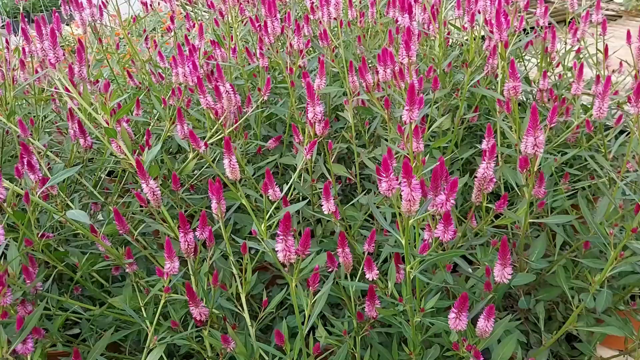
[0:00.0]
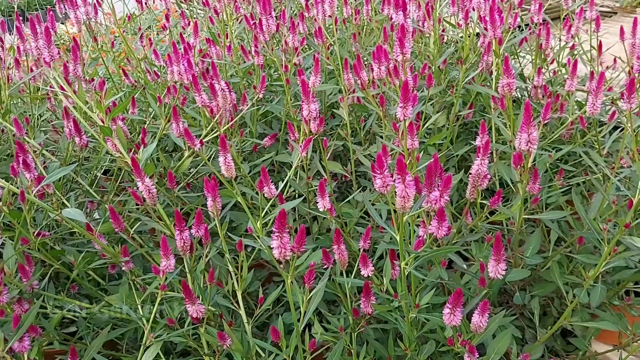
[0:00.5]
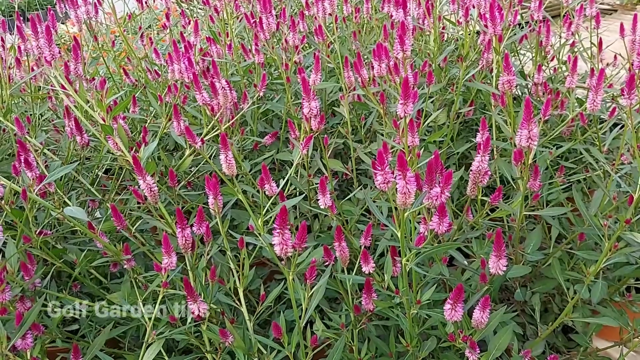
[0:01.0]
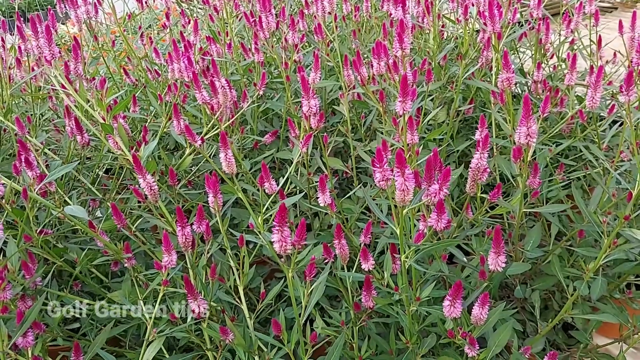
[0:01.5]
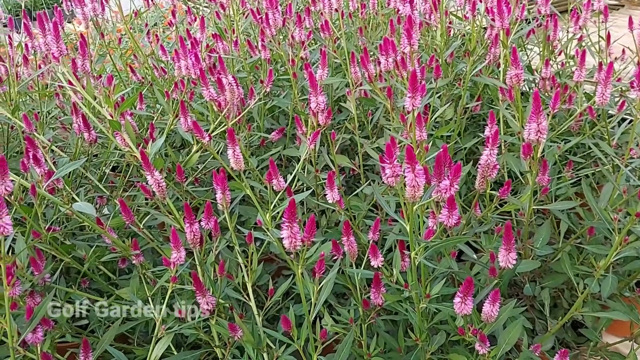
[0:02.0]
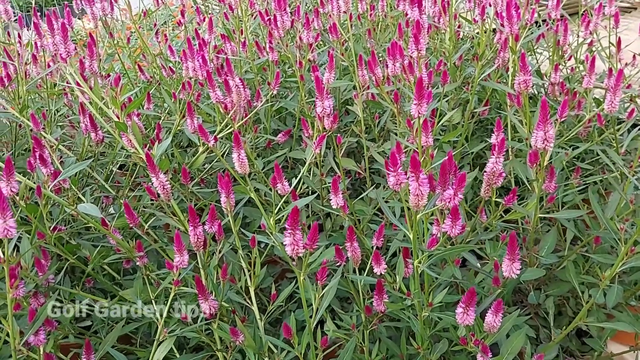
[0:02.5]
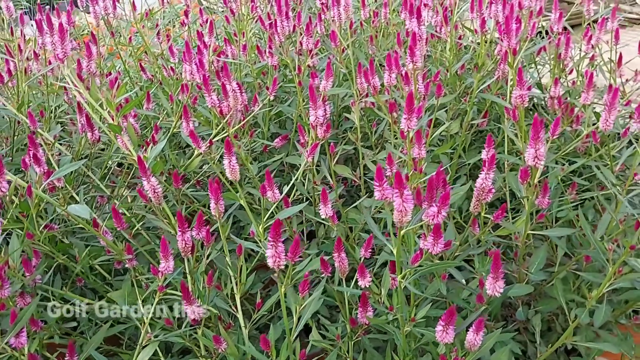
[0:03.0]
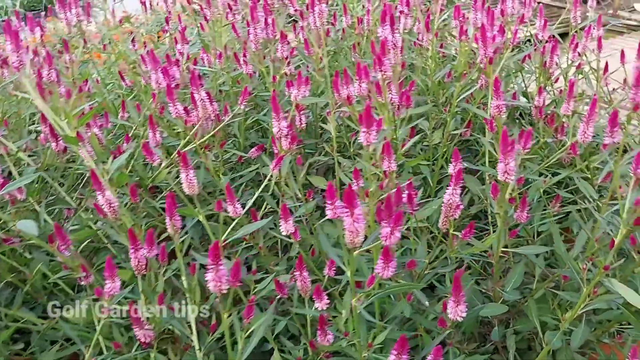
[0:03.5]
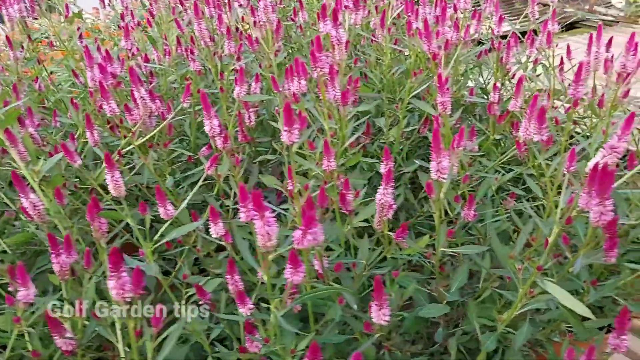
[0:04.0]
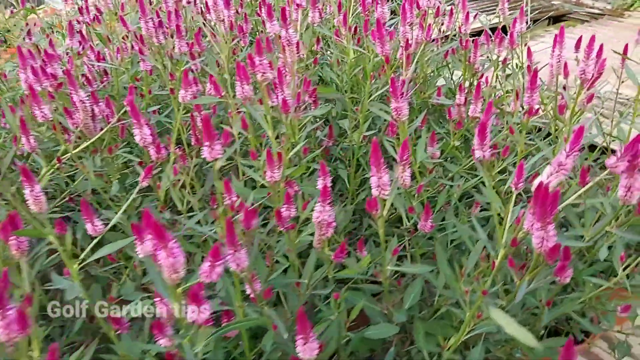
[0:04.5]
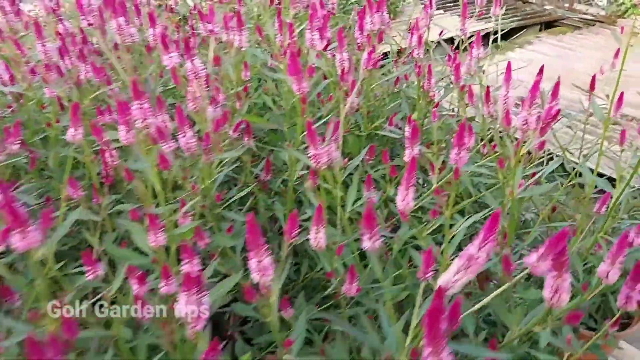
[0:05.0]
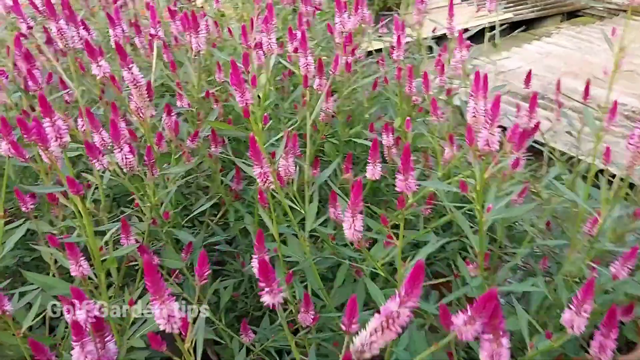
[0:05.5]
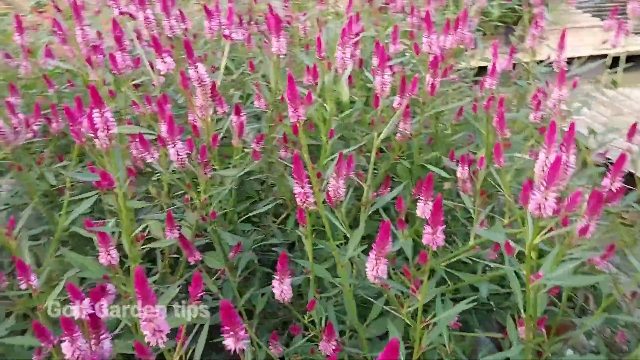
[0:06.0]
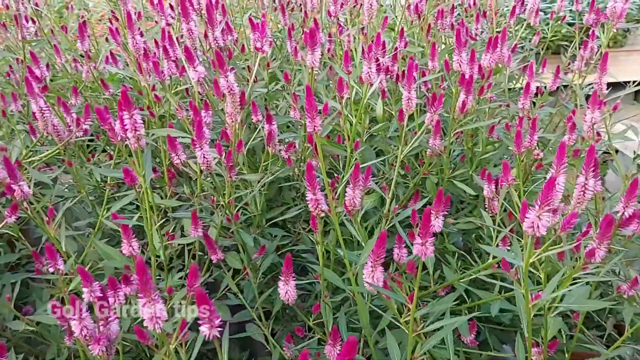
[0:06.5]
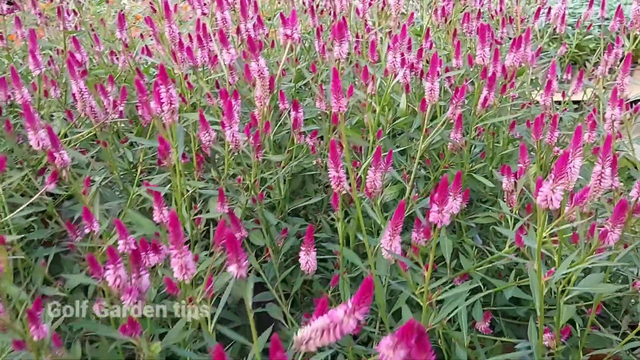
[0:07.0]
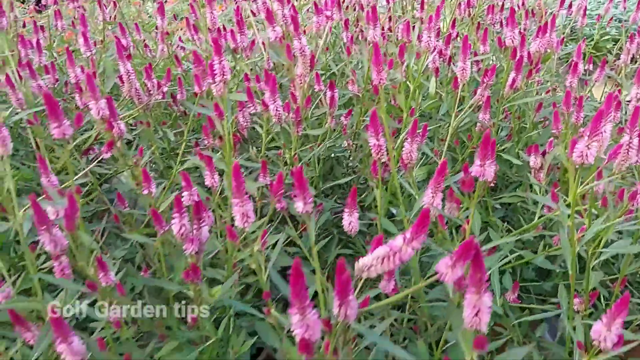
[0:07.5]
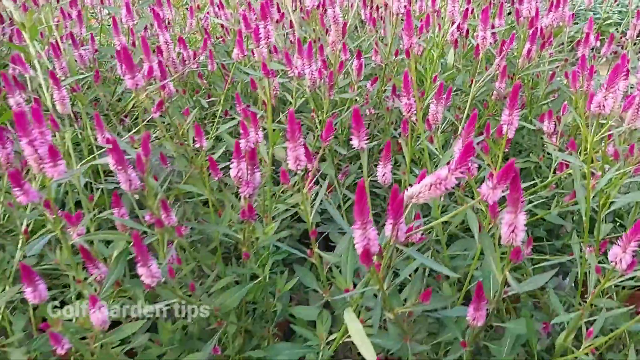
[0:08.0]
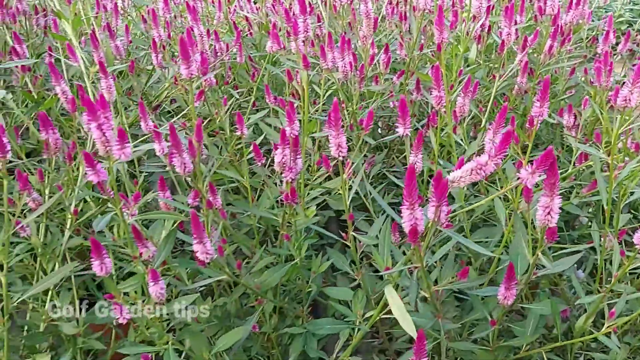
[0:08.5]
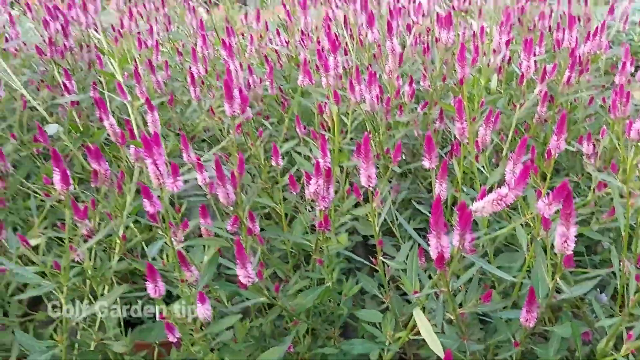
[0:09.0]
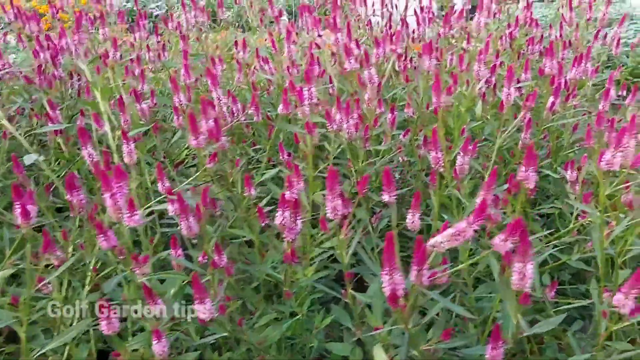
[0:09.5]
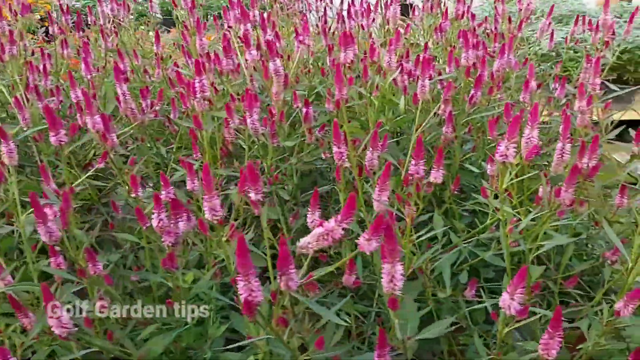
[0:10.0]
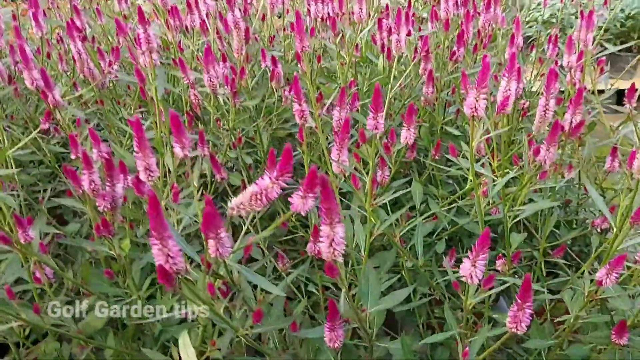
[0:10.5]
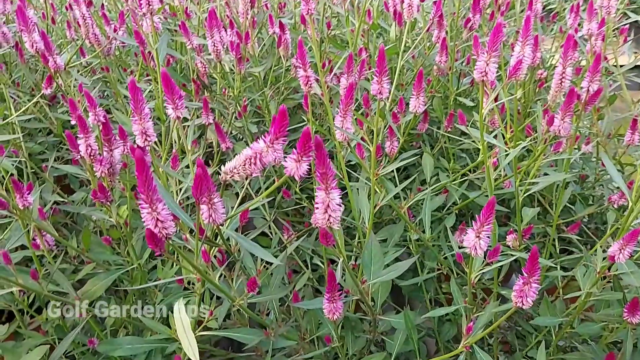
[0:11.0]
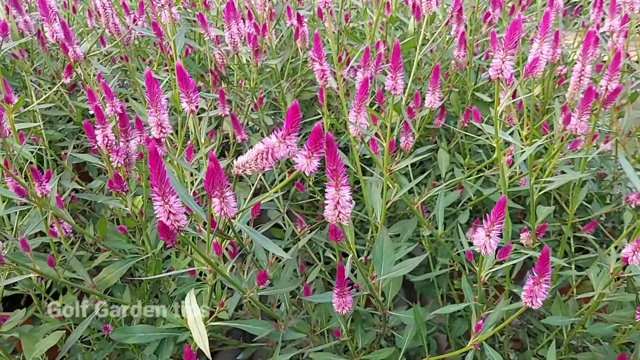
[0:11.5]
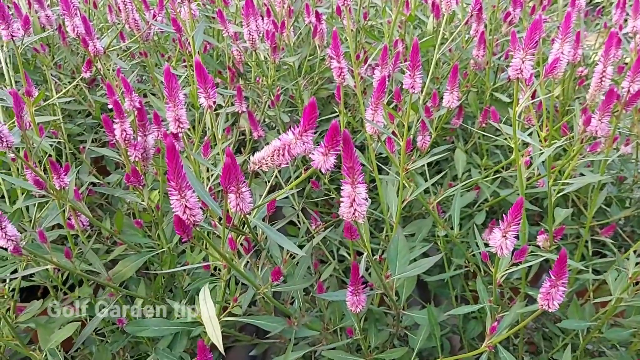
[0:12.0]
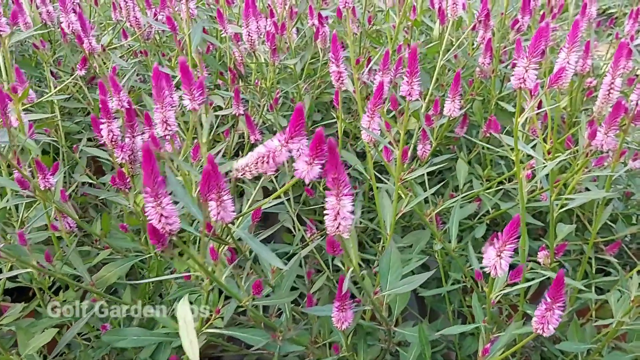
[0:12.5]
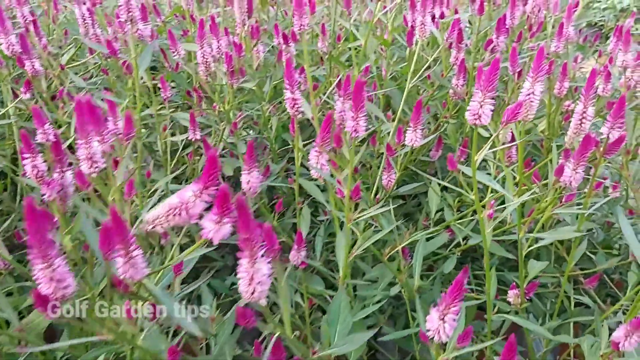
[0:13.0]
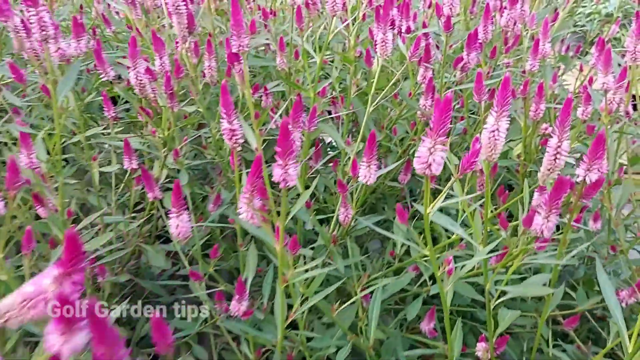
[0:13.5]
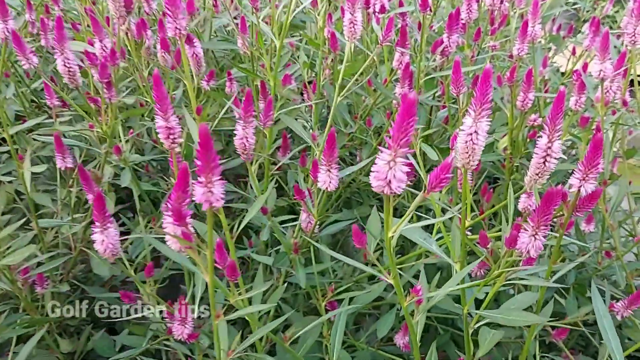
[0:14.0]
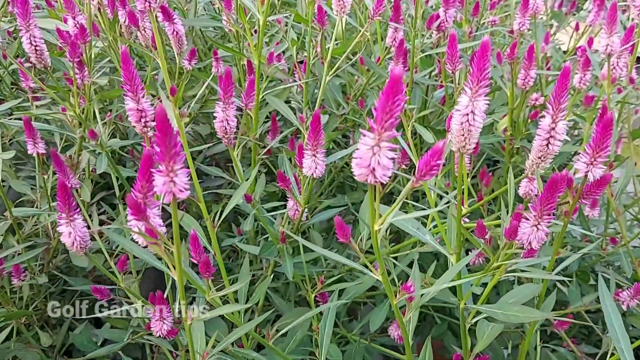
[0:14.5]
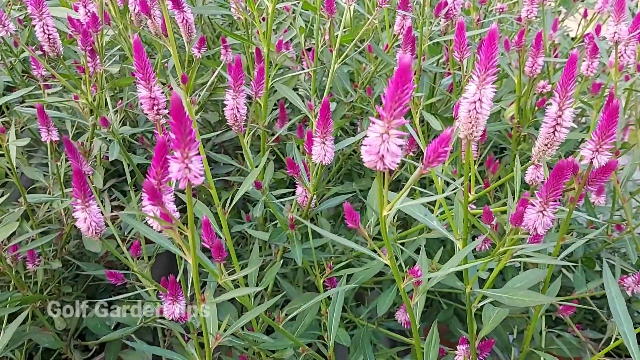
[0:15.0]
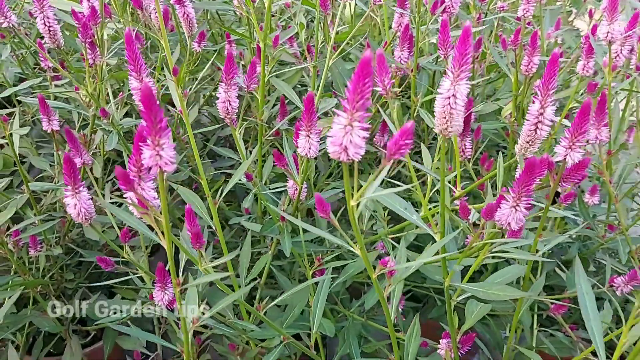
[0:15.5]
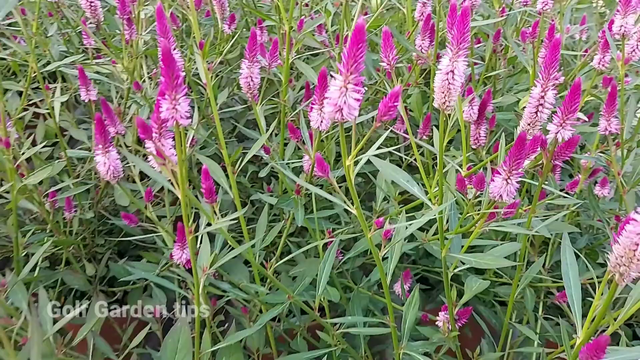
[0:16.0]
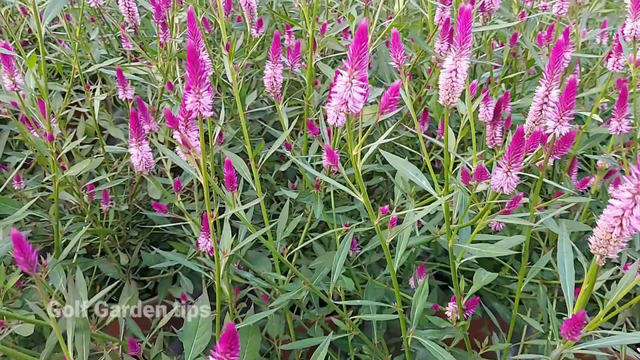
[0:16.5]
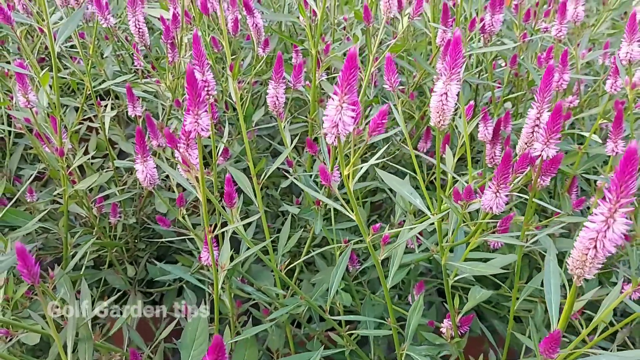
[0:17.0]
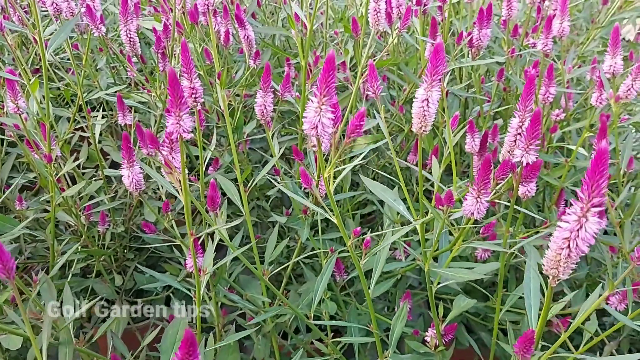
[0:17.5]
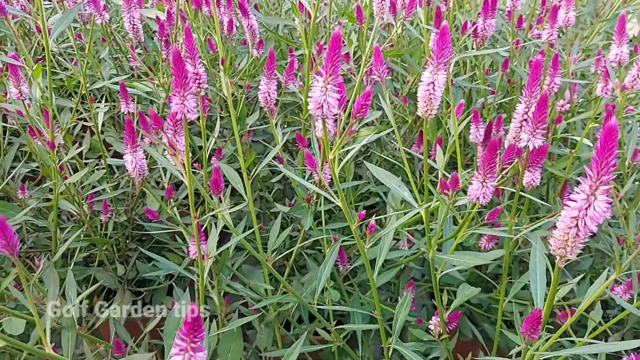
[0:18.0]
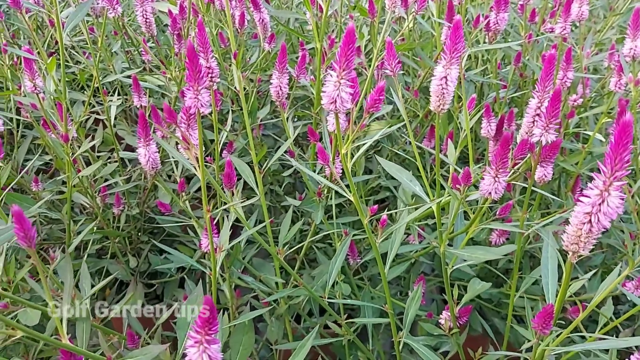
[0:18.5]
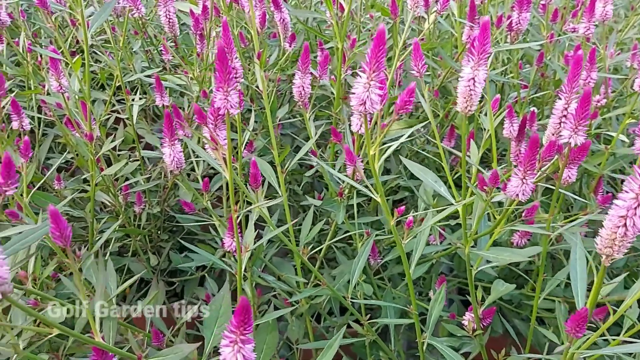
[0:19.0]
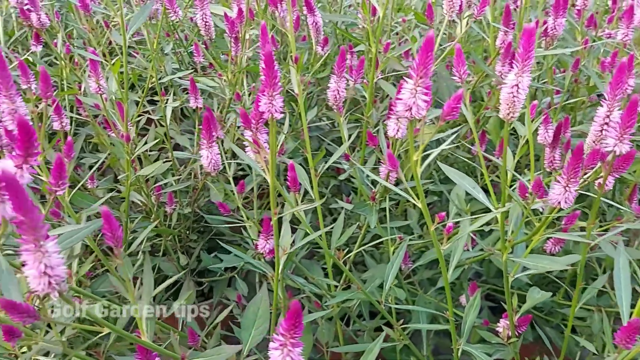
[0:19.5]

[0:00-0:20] A field of flowers appears. The flowers are long, sort of like violets or lilacs, in ombre shades of pink running from light pink at the base to bright pink at the tips. Many green leaves surround them, so there is a lot of greenery at the base with small pink tips sticking out of the top. Text appears on screen reading "golf garden tips" as the person holding the camera walks around the plant they are showing, and butterflies and other insects flit between the plants, nesting within. No other tips appear on screen besides "golf garden tips", but the camera moves as though the person holding it is also narrating. It shakes slightly, though not enough to obscure the view. As they turn, the background shows that they are possibly in a larger garden, with some supplies and pathways leading to other plants. They zoom in and out on the plant in front of them, revealing that there is possibly also a building behind. They dip the camera down into the plant, showing that beneath the visible top layer of buds there is a secondary layer at the bottom, so the plant grows flowers on multiple levels. The bottom layer is an even thicker carpet of buds than the top layer. A few wildflowers are mixed in toward the edges.